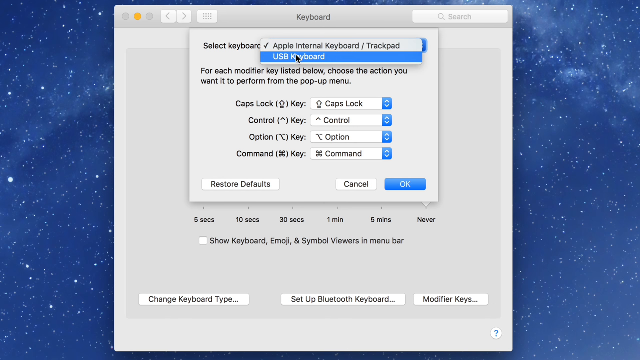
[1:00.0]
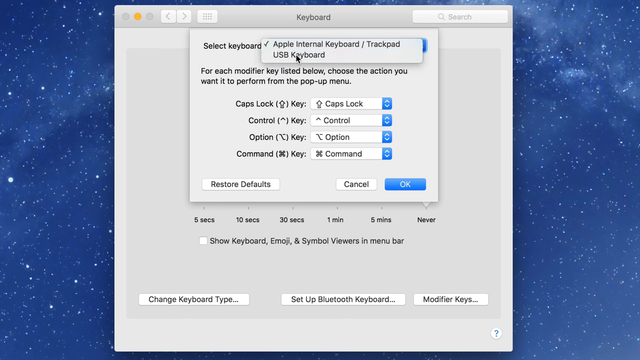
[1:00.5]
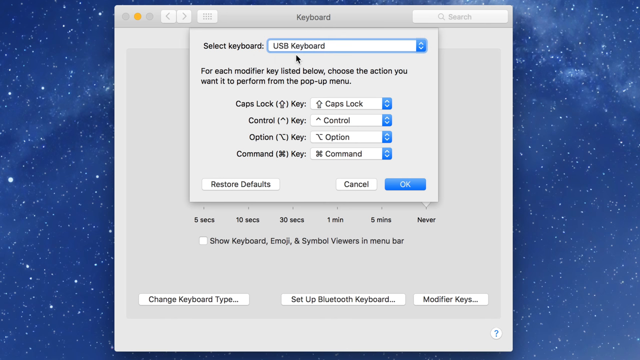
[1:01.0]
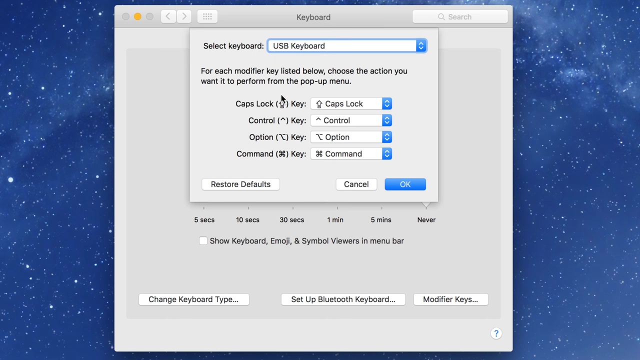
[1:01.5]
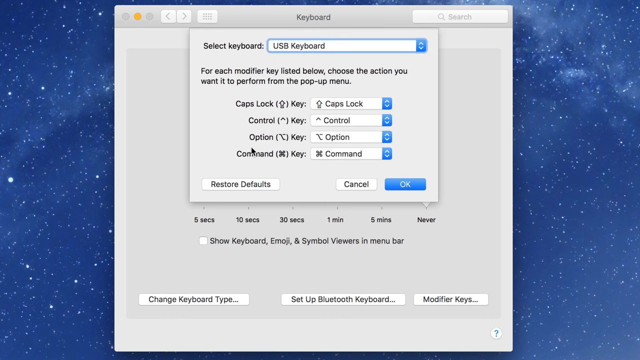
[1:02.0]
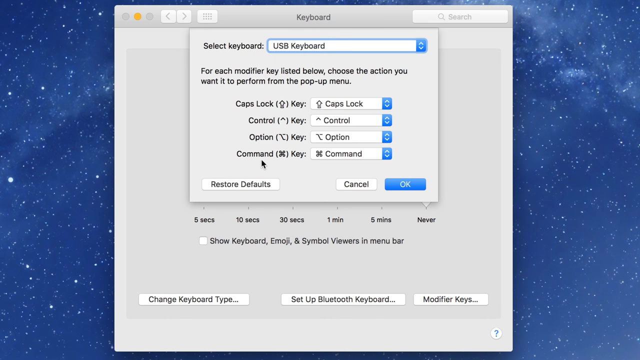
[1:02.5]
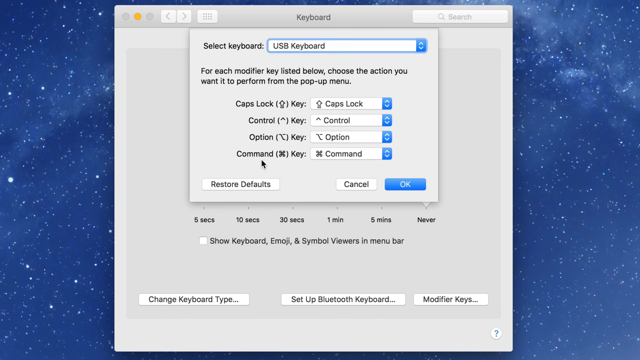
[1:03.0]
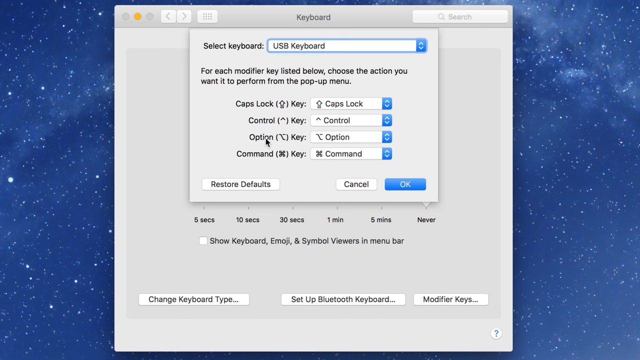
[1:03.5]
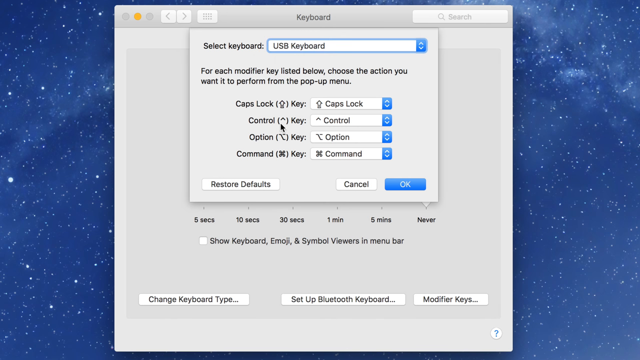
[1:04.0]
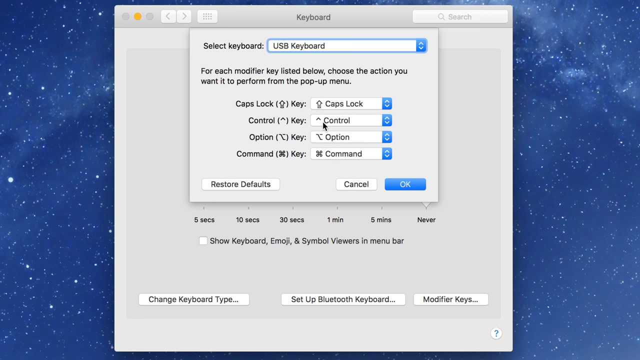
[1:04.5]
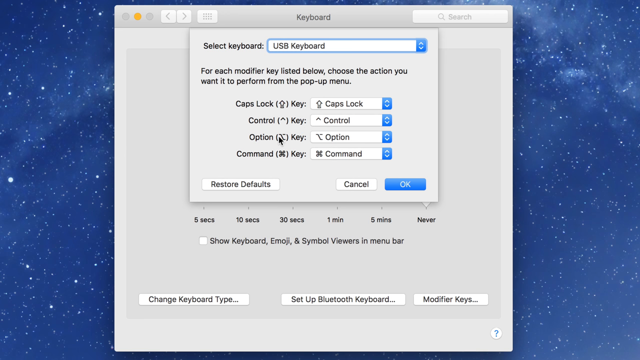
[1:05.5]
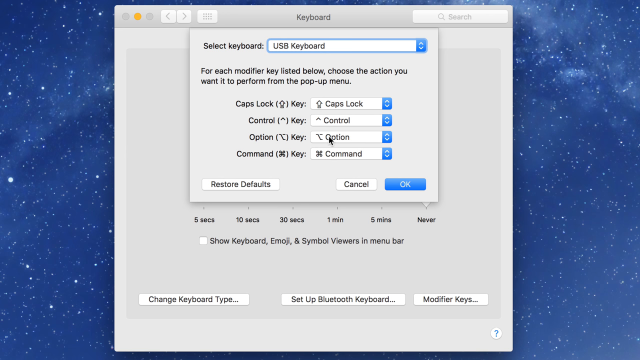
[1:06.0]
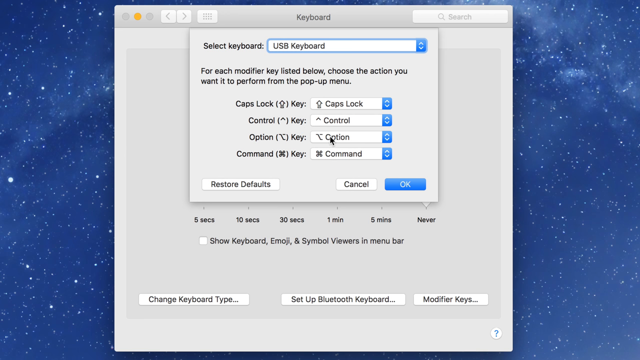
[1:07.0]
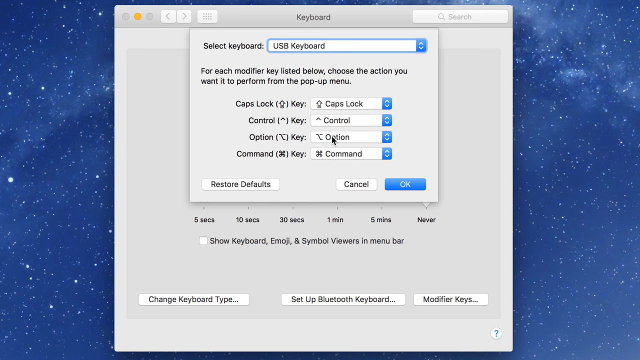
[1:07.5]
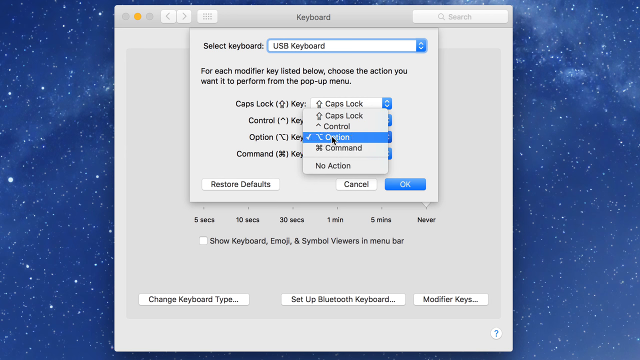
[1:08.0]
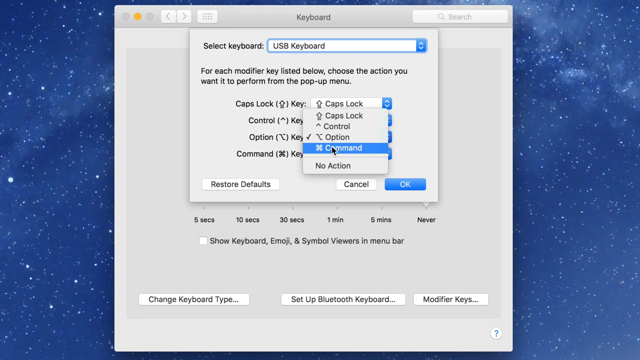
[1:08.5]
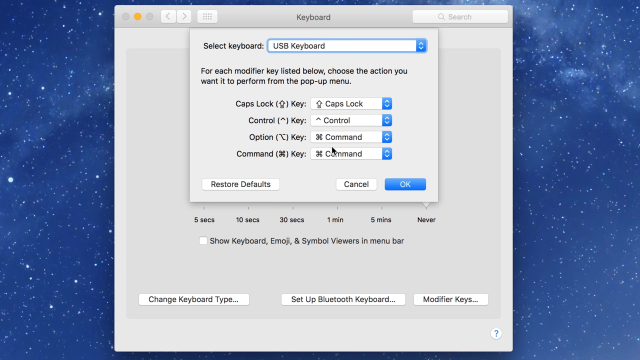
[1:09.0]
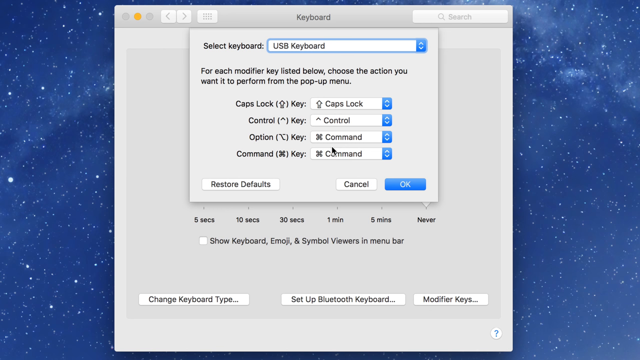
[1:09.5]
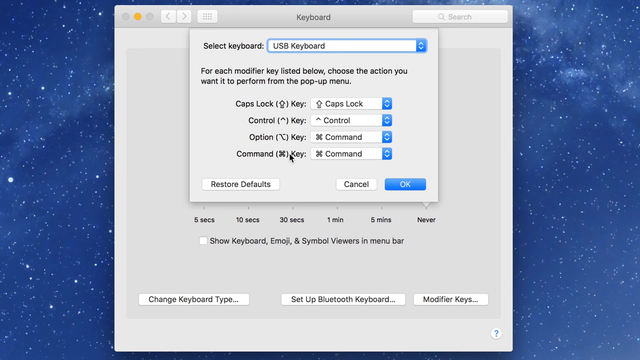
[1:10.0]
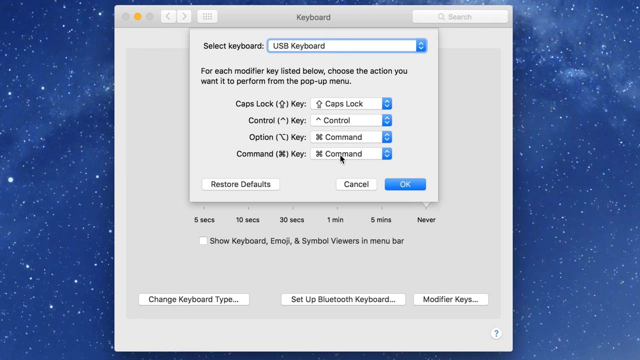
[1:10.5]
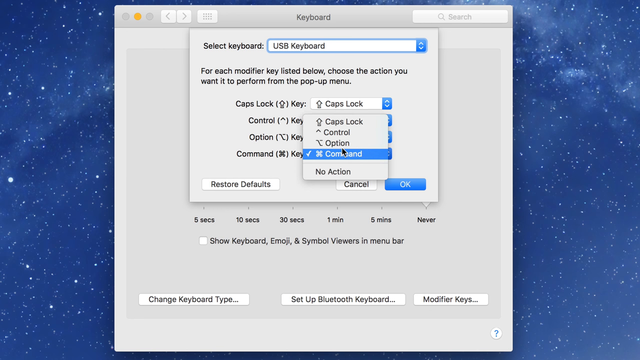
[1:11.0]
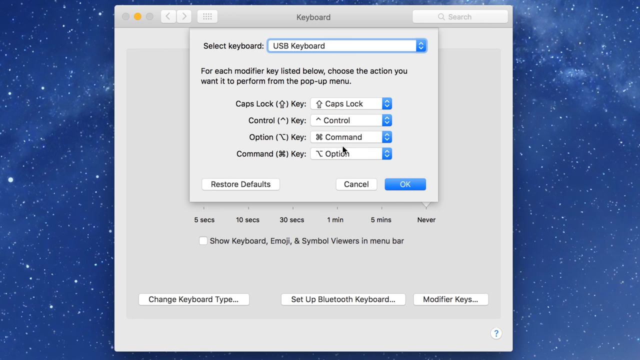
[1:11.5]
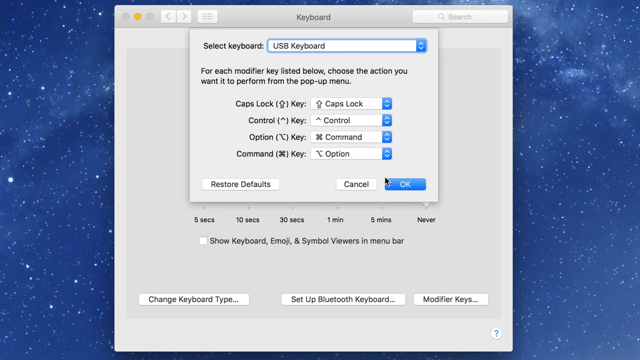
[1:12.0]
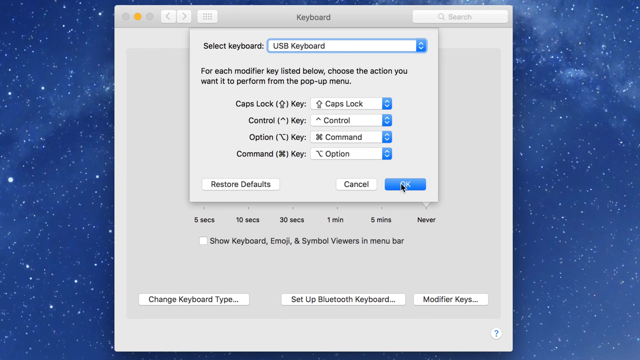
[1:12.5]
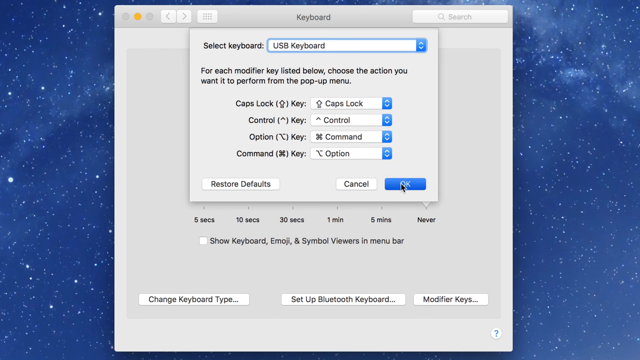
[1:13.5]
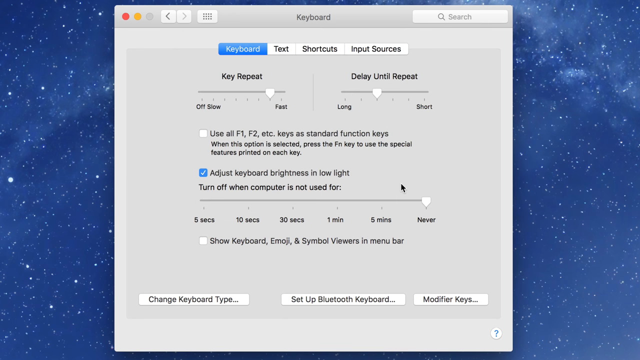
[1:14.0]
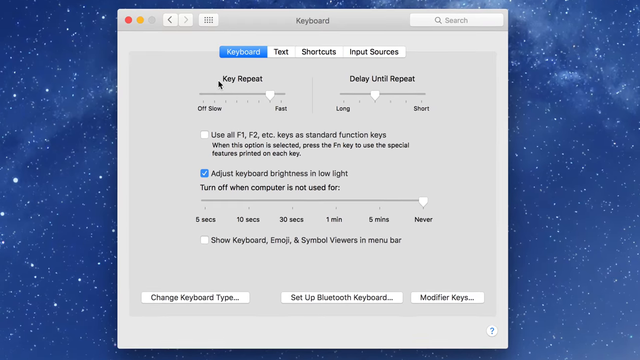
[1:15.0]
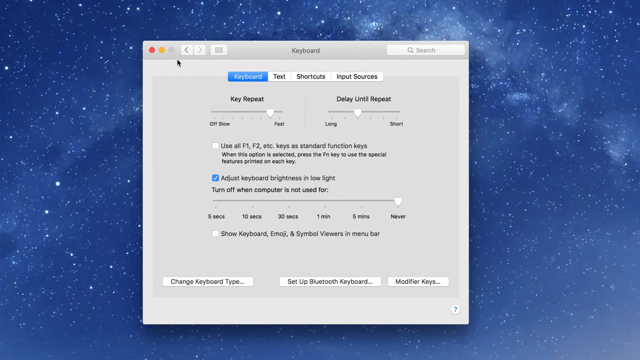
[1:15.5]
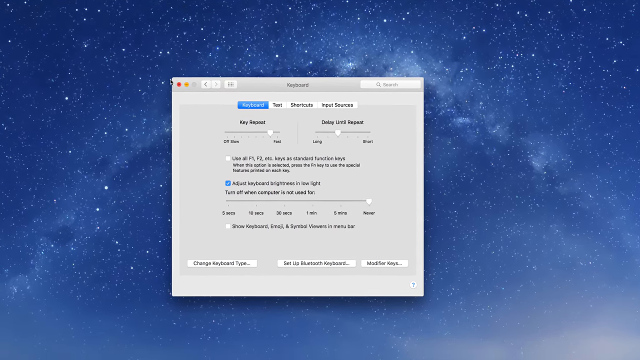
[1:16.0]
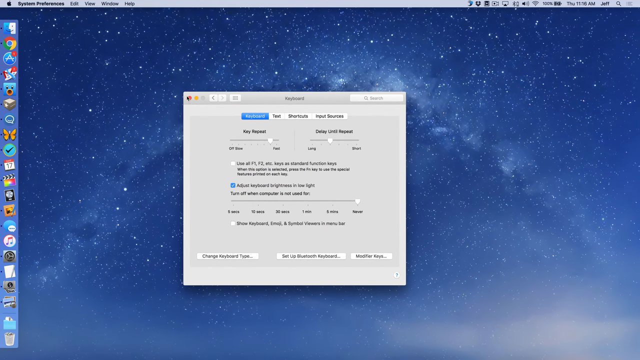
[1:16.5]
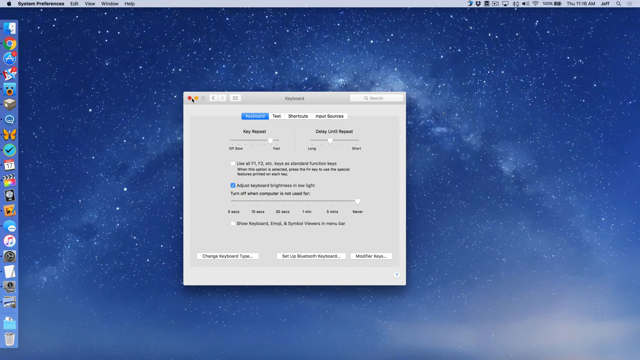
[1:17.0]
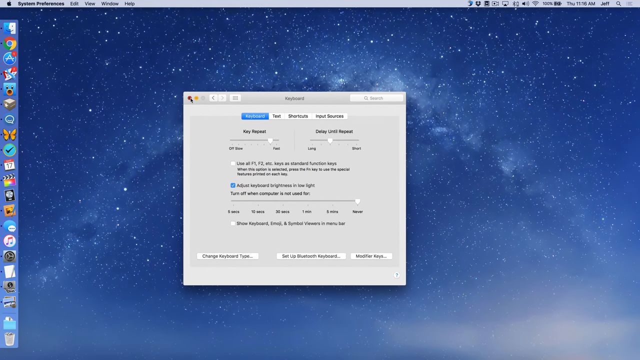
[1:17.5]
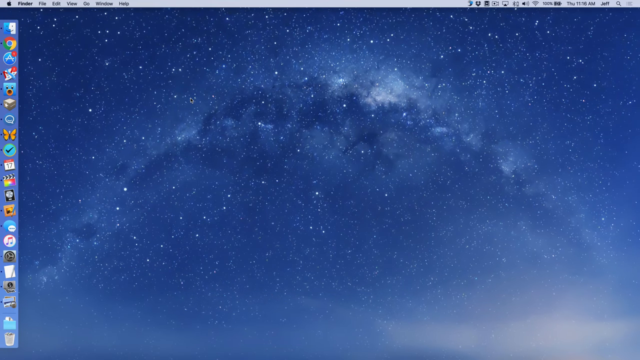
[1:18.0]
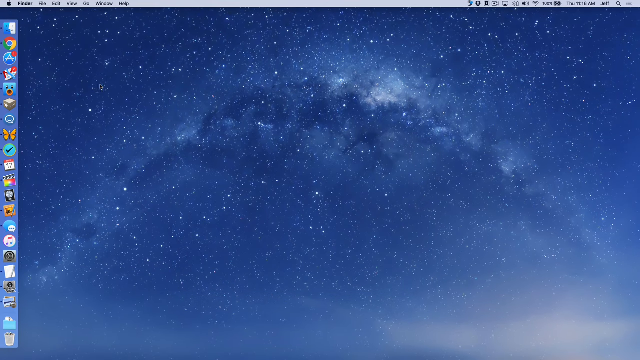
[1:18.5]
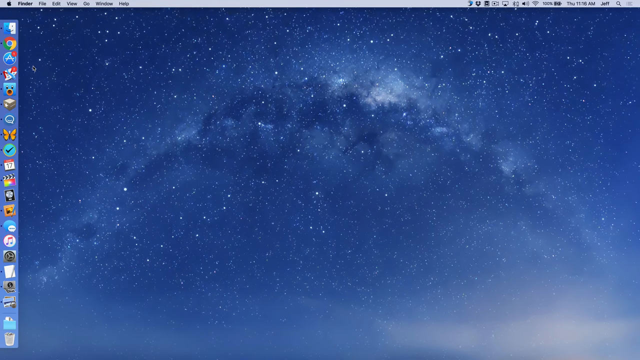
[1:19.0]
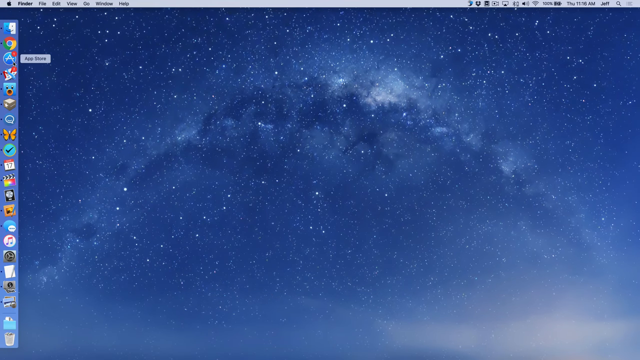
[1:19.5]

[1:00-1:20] A screen that appears to be a Windows screen has a background of what looks like stars, like a sky. The open window says "Keyboard" and shows keyboard options, with a section reading "USB Keyboard" highlighted. They click on it, then kind of move the controller between a few words such as control, option and command, highlighting the control option with its icon. They highlight option, click it and change it to command, then click command and change it to option, and click the OK button. The screen then begins to zoom back out, so the background becomes larger. They click a red button in the gray box, which closes it, and then click an icon with an A that appears like it could be for an app store.